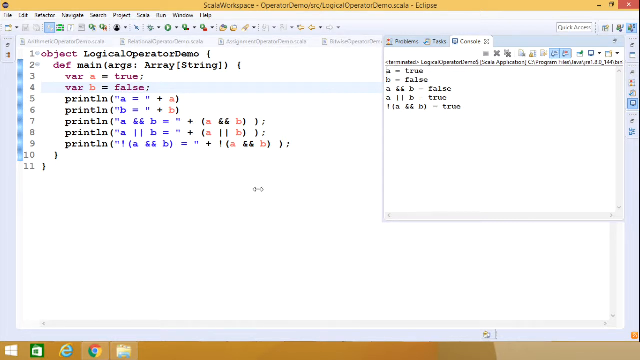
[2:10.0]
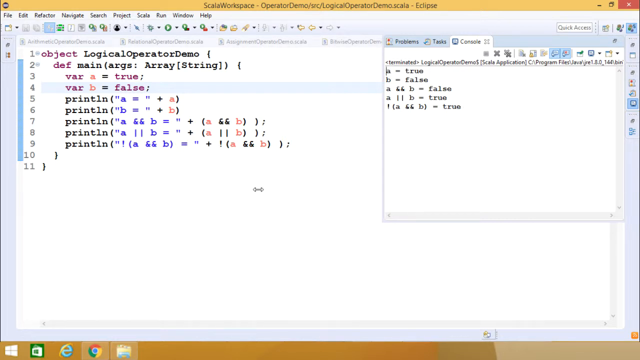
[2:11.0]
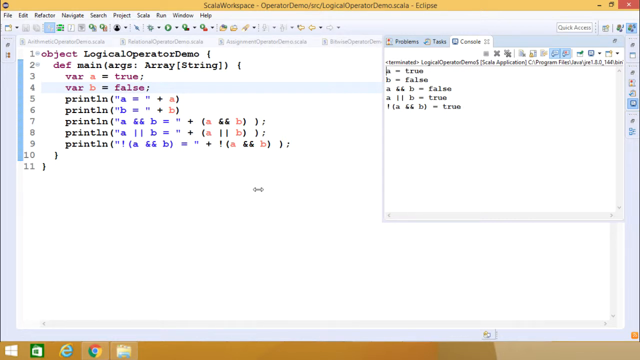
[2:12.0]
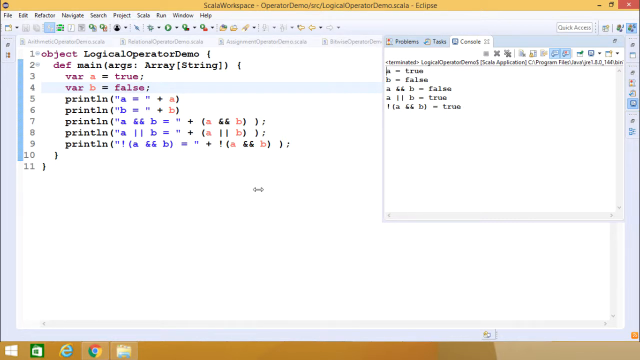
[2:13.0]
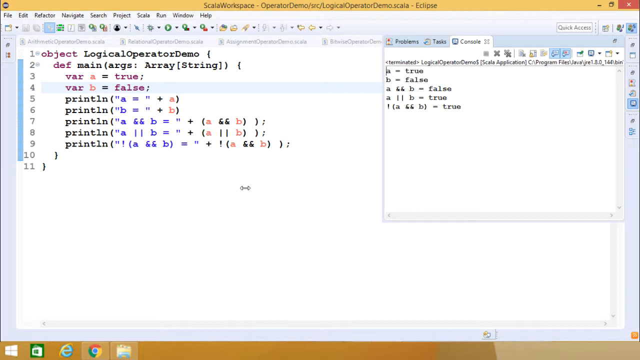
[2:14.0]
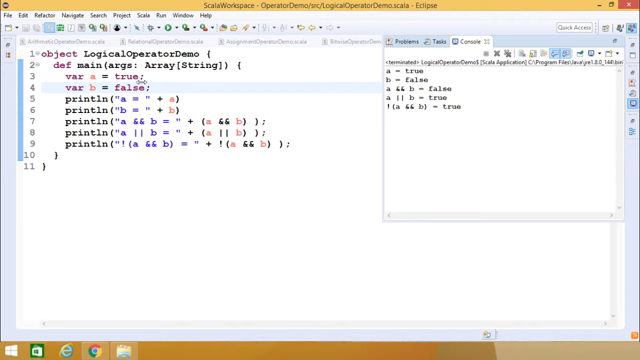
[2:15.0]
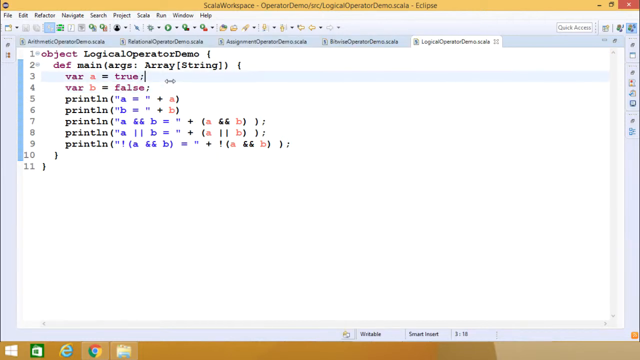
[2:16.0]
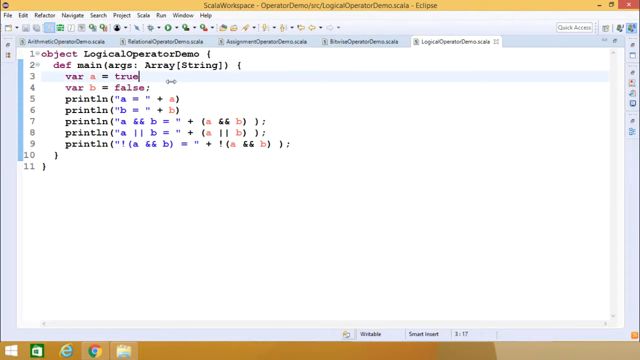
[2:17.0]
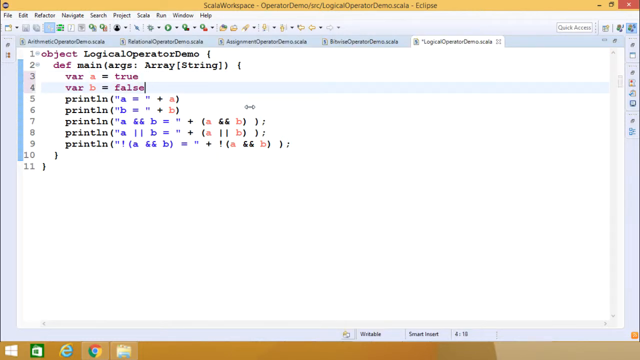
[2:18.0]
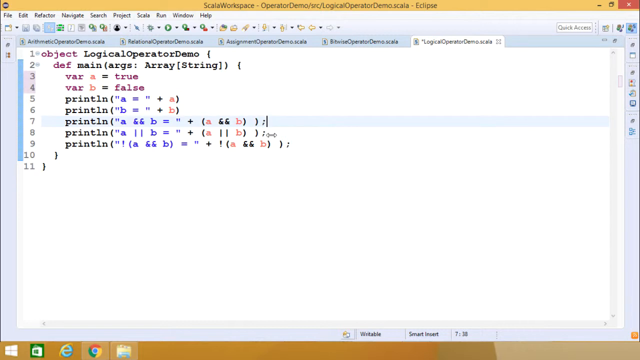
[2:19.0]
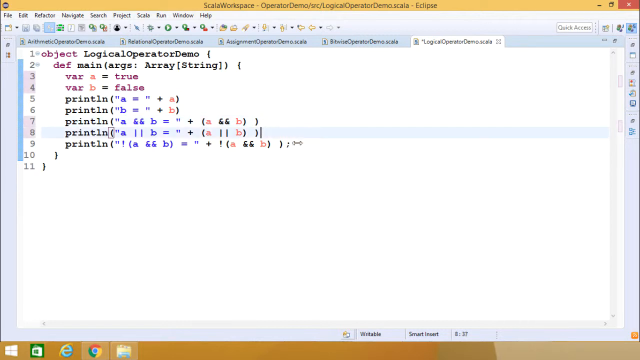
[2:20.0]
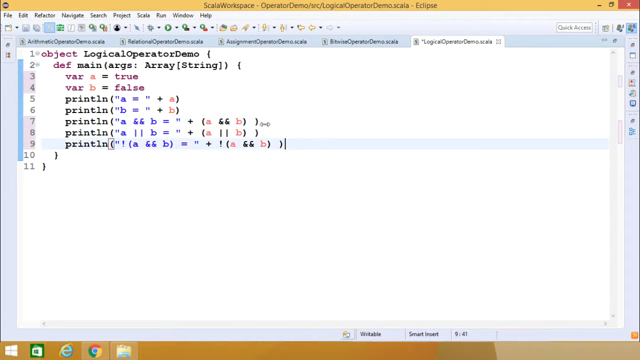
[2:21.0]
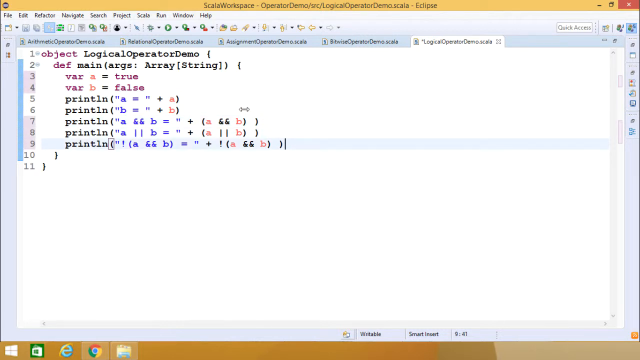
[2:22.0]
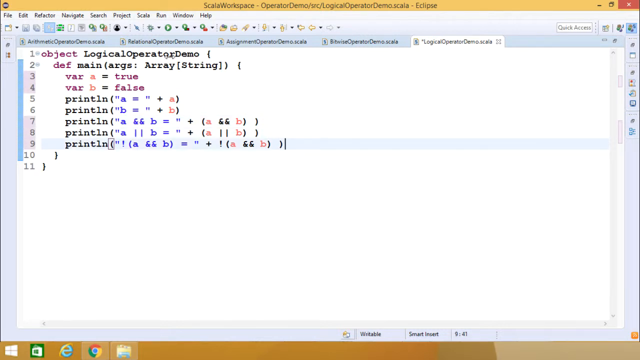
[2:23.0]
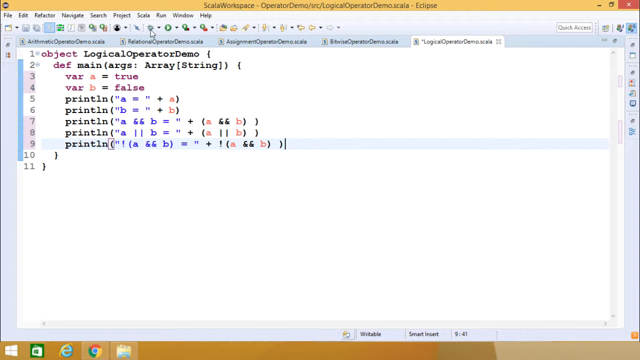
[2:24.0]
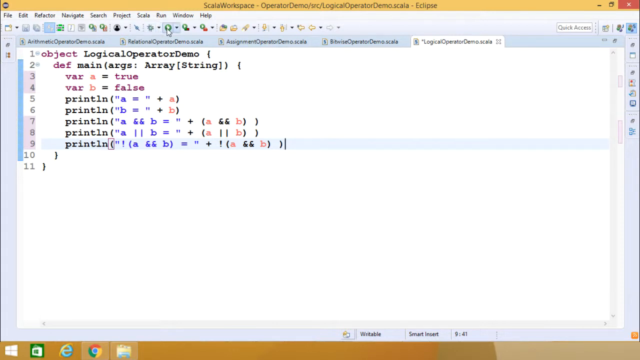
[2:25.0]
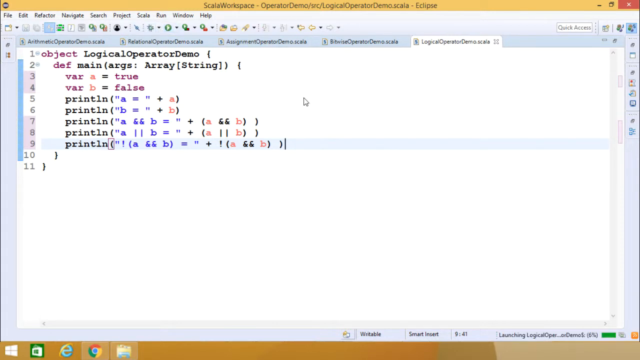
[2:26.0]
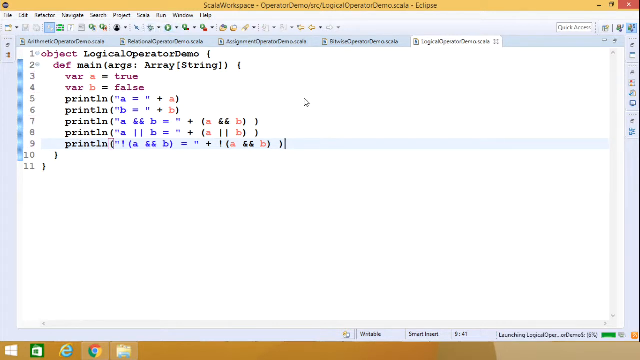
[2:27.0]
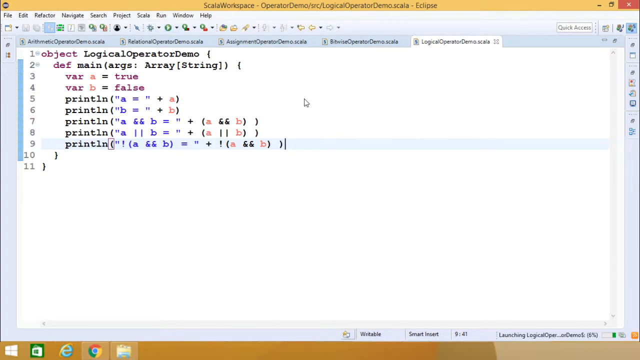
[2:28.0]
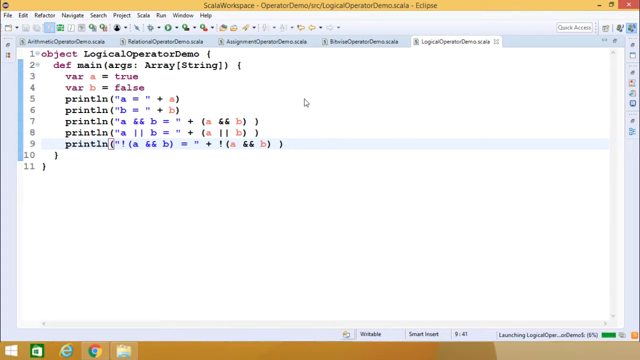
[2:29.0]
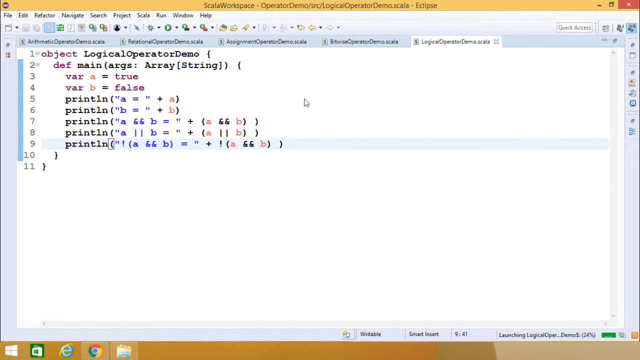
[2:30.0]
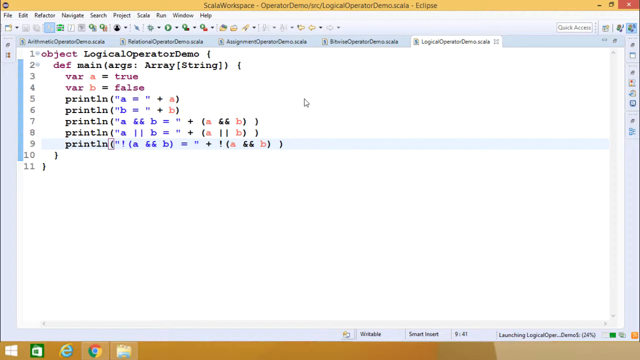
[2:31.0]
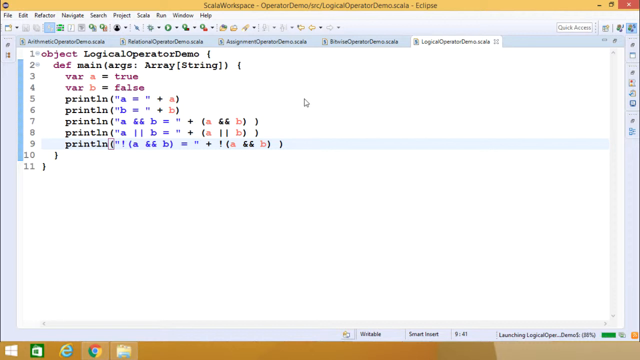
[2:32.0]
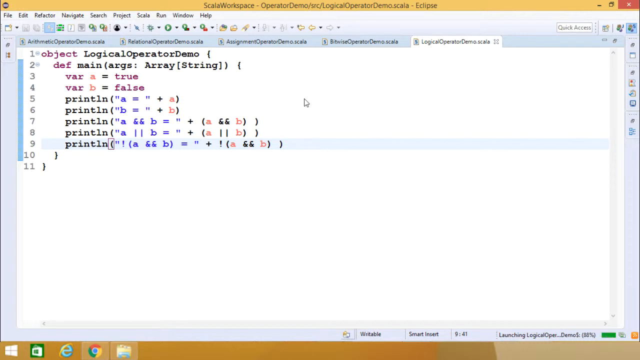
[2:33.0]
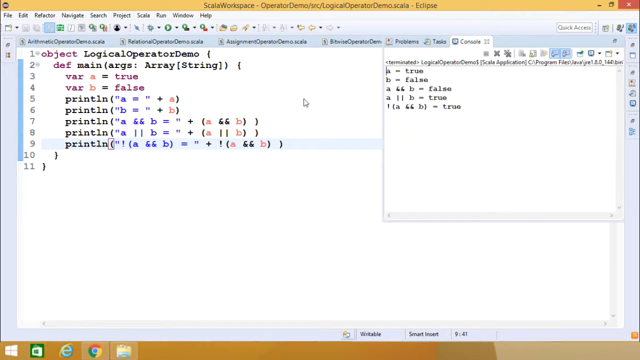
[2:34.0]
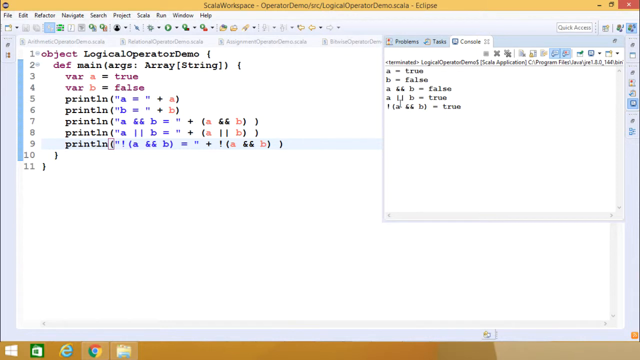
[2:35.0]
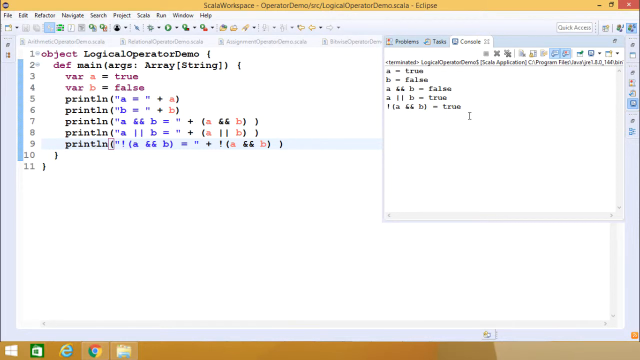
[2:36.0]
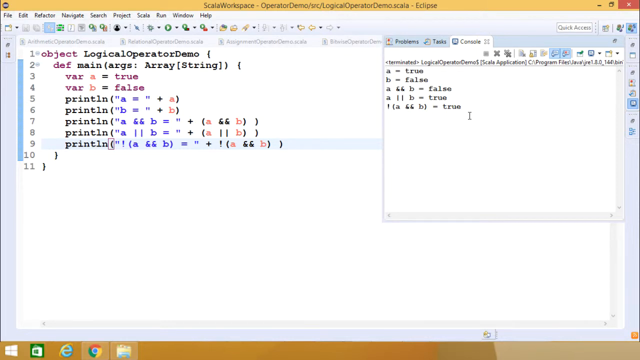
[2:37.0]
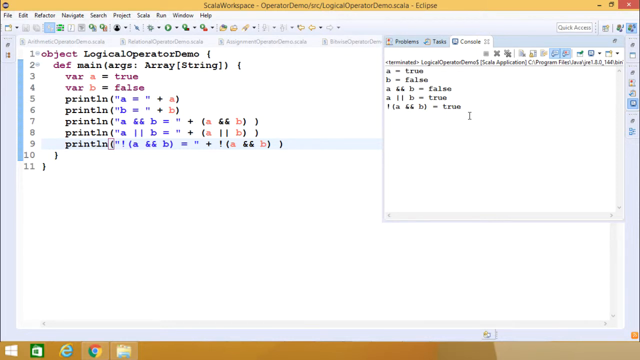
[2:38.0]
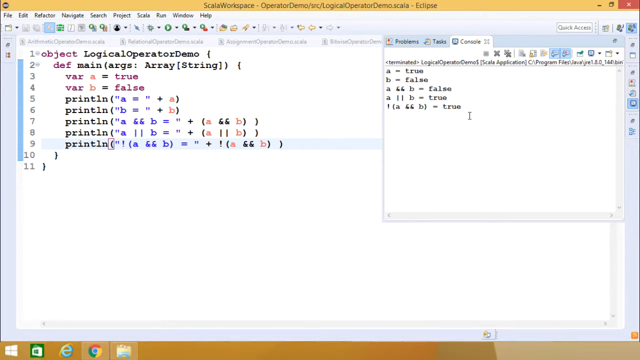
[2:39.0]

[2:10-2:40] The program, named operator demo, is written out. Its last three lines are print lines: one prints a logical and b equals followed by the value of a logical and b, the next prints a logical or b equals followed by the value of a logical or b, and the last prints logical not applied to a logical and b, followed by its value. The printed values appear on the right: a is true, b is false, a logical and b is false, a logical or b is true, and the logical not of a logical and b is true.